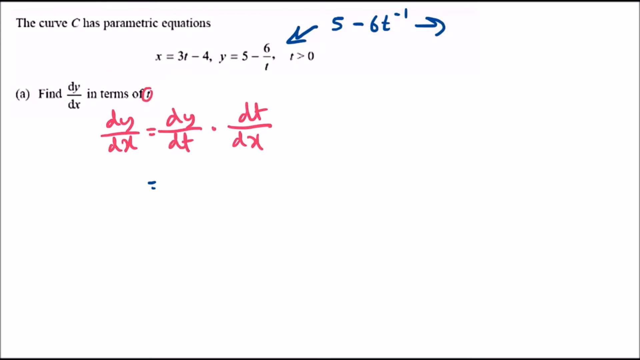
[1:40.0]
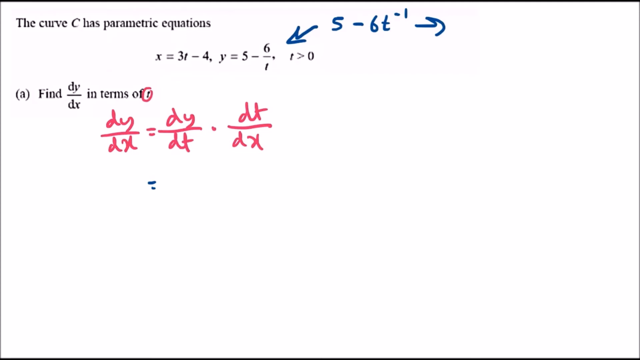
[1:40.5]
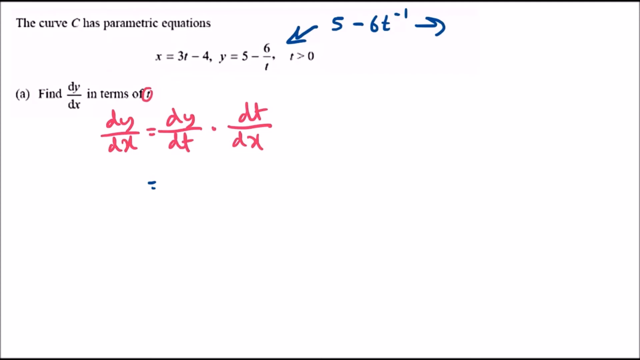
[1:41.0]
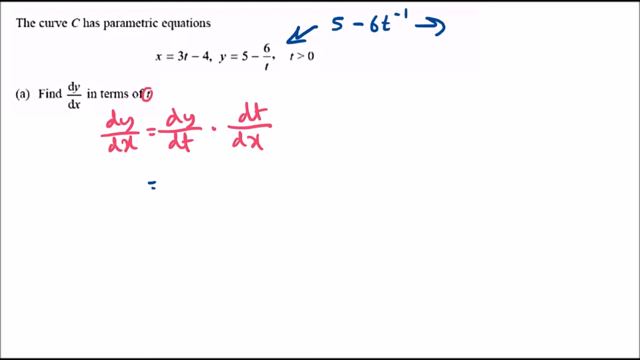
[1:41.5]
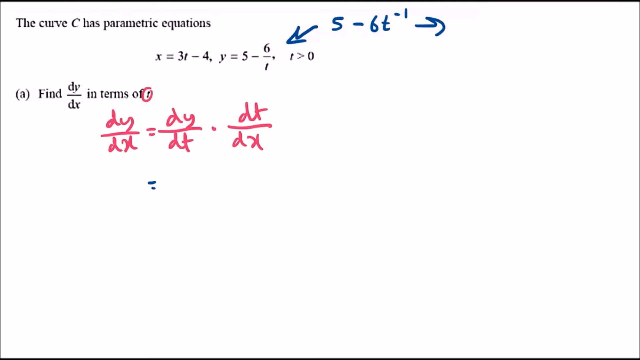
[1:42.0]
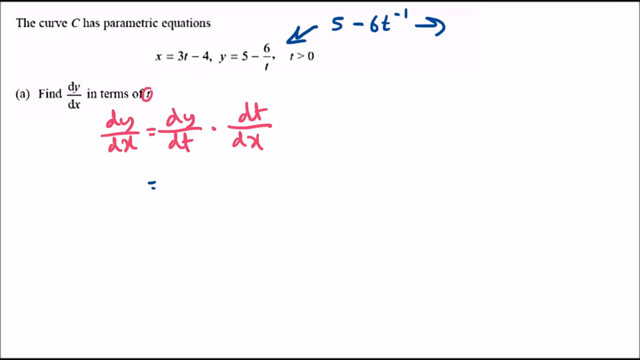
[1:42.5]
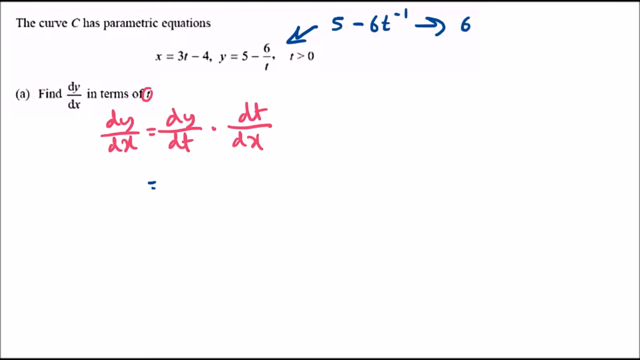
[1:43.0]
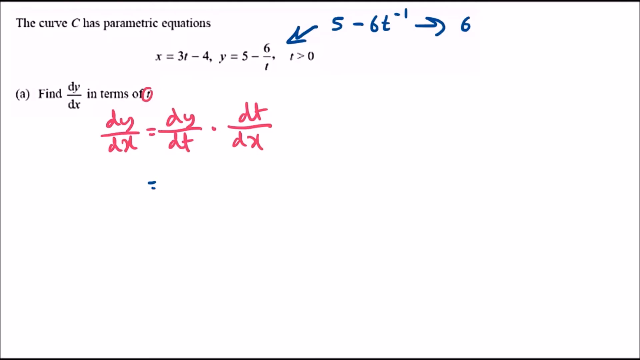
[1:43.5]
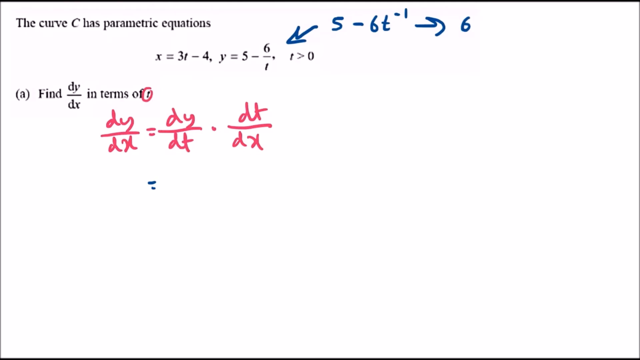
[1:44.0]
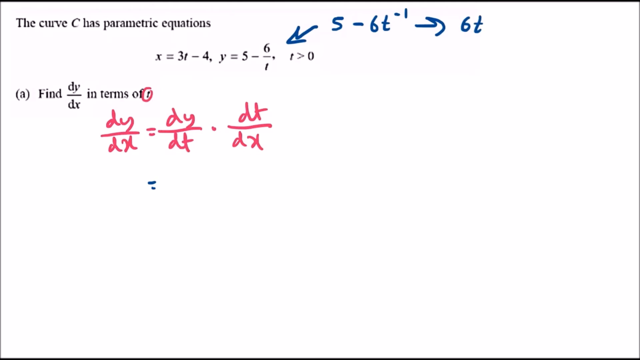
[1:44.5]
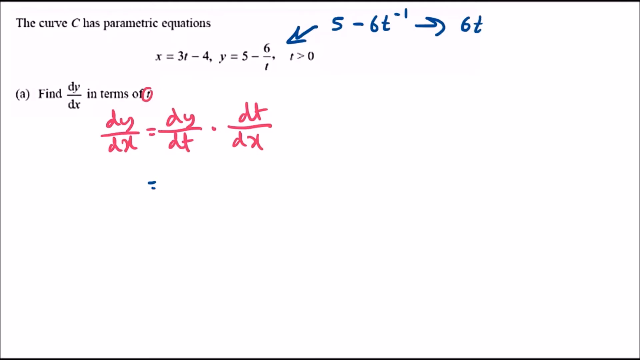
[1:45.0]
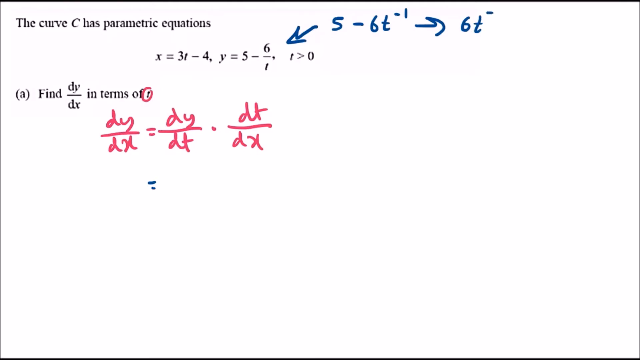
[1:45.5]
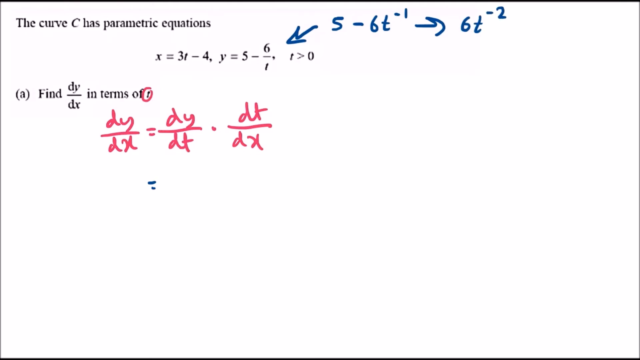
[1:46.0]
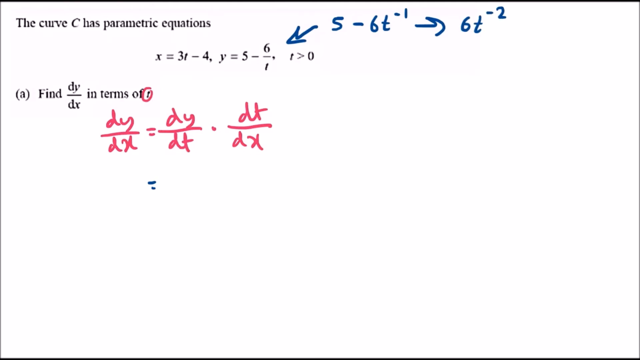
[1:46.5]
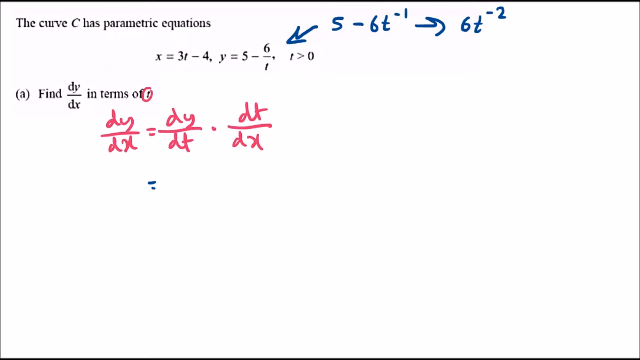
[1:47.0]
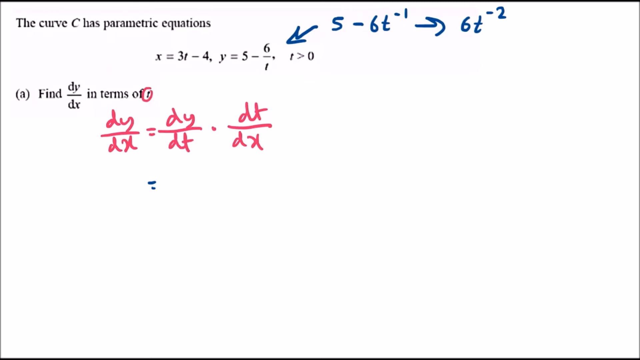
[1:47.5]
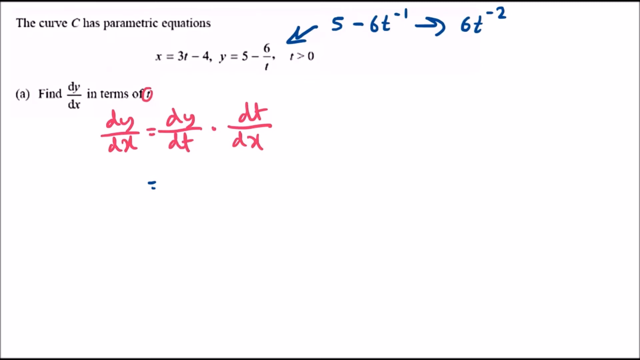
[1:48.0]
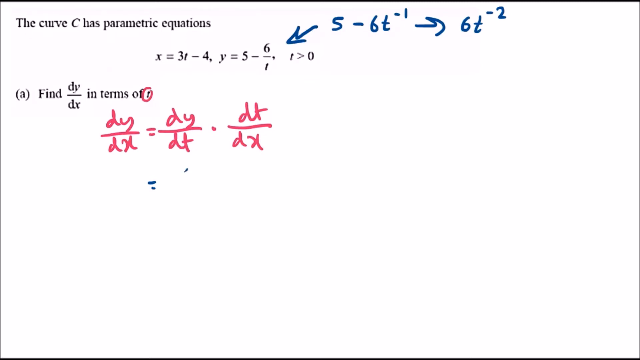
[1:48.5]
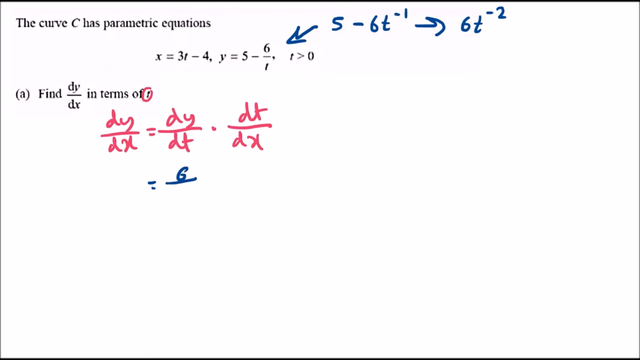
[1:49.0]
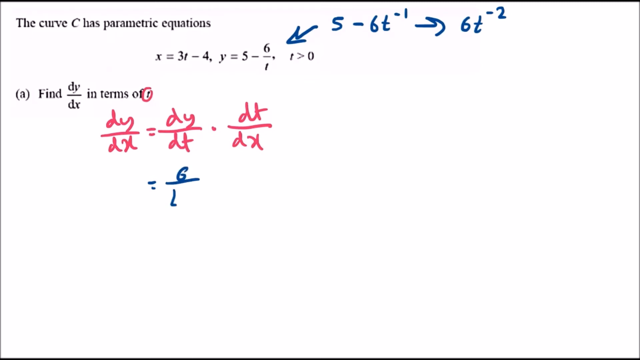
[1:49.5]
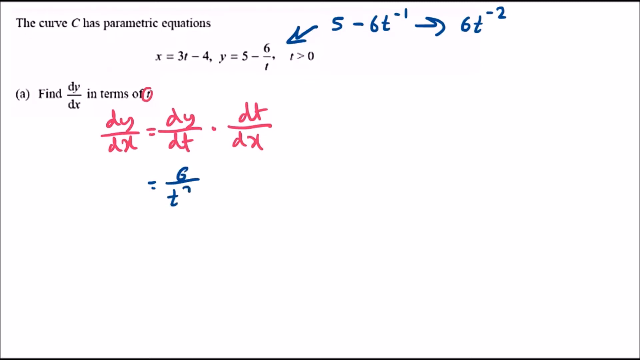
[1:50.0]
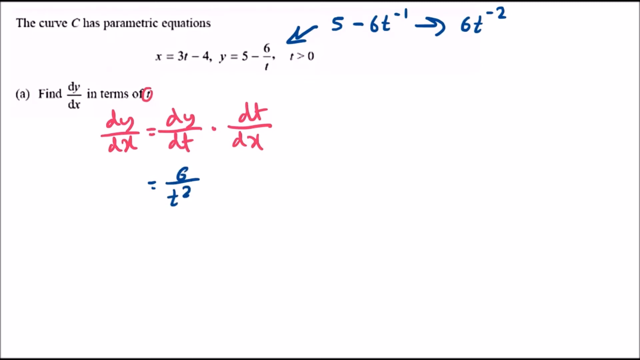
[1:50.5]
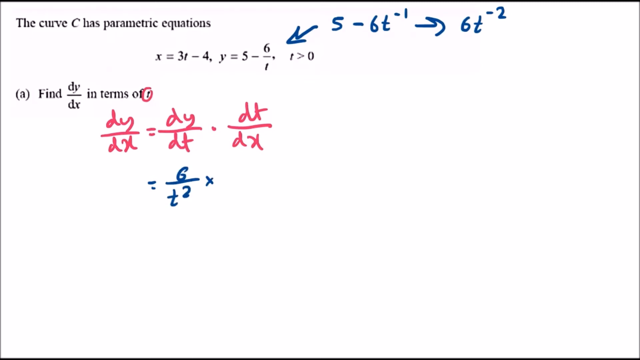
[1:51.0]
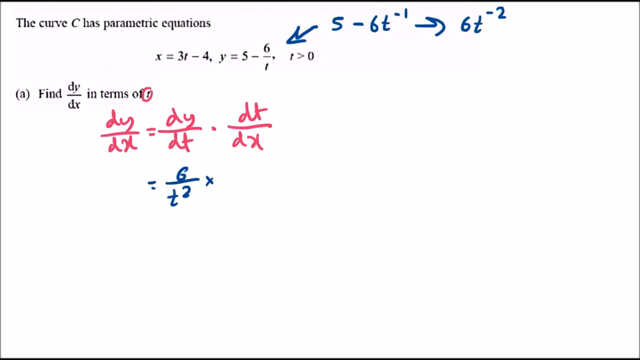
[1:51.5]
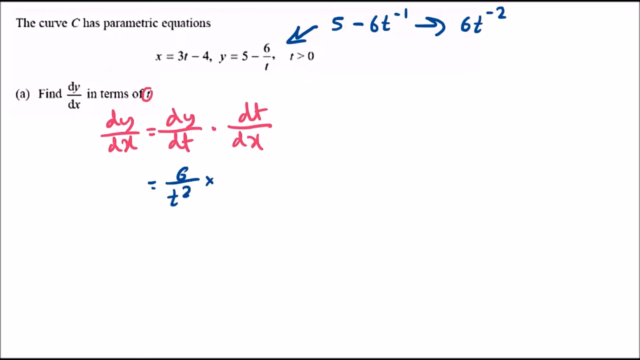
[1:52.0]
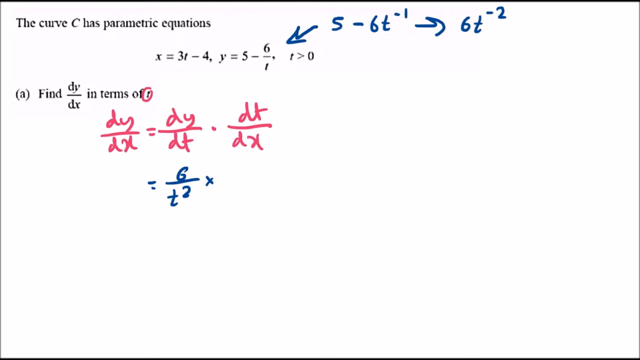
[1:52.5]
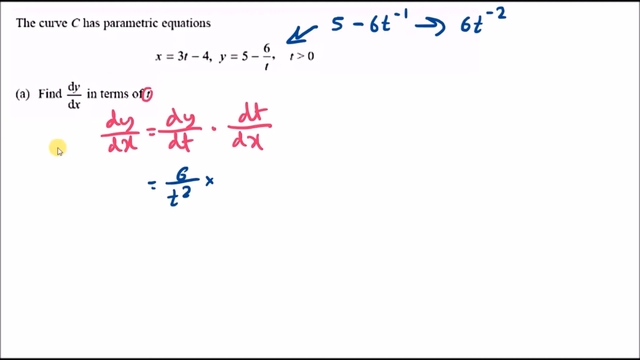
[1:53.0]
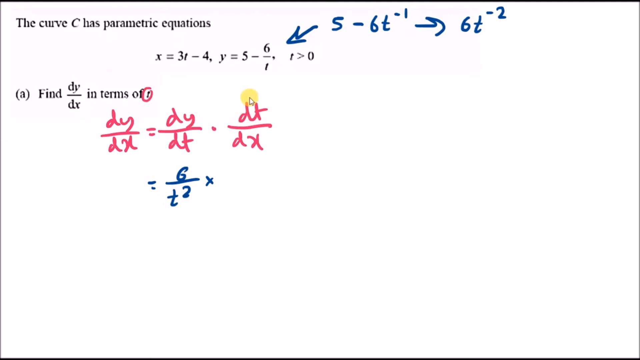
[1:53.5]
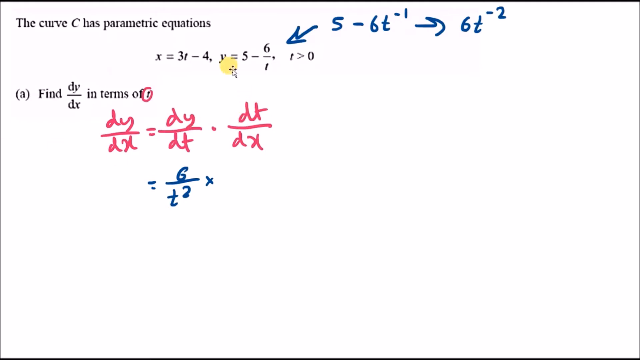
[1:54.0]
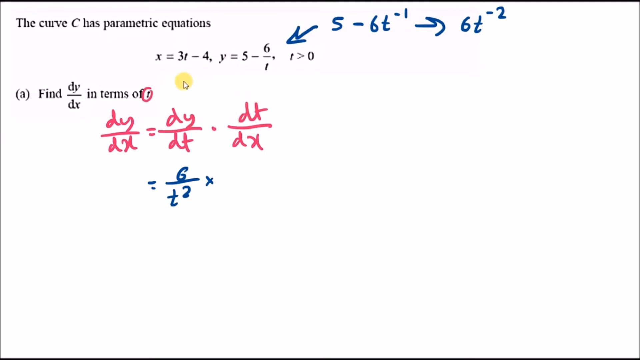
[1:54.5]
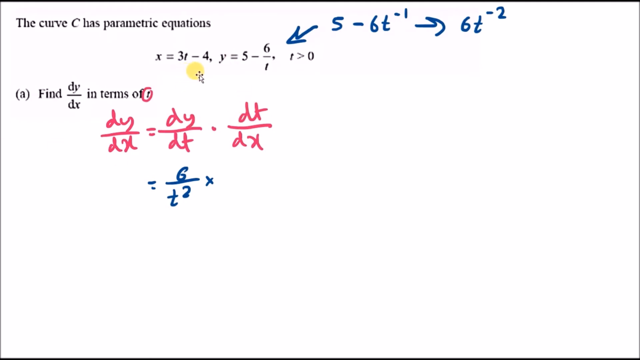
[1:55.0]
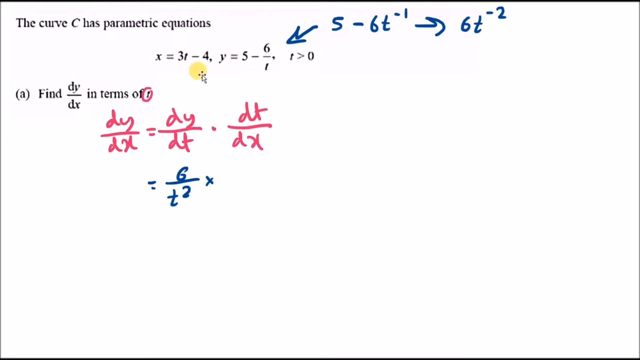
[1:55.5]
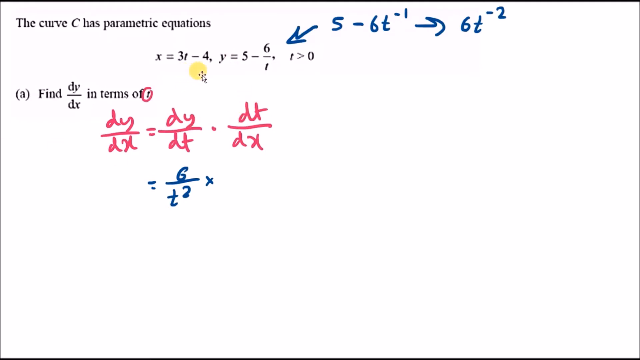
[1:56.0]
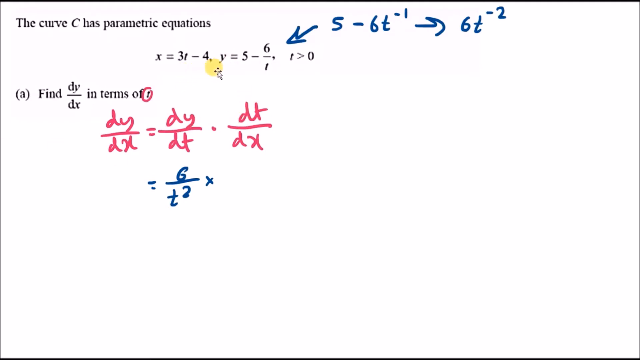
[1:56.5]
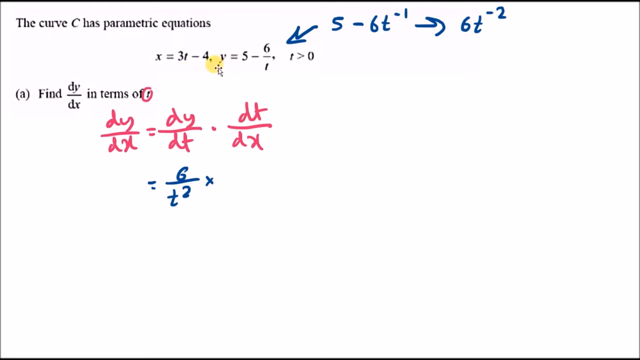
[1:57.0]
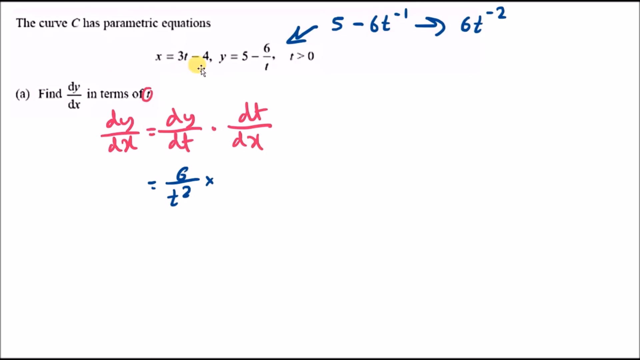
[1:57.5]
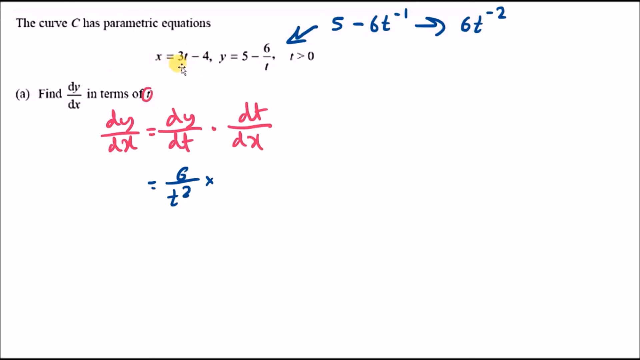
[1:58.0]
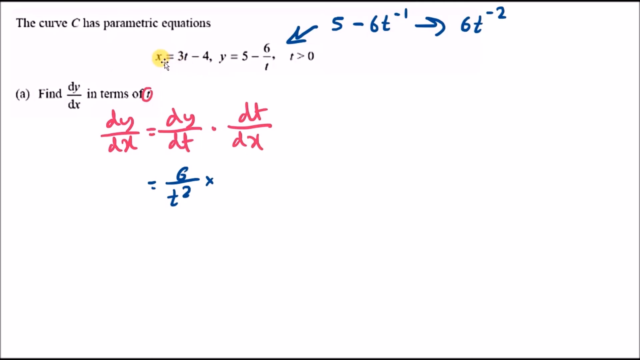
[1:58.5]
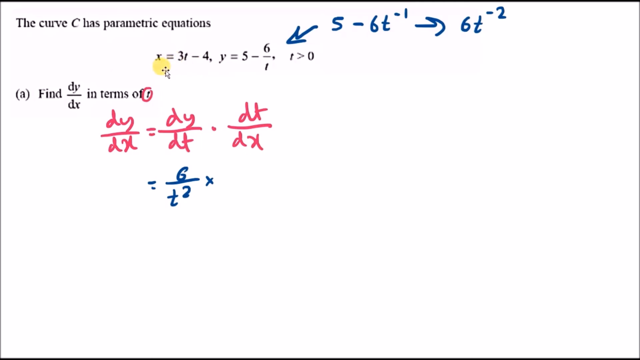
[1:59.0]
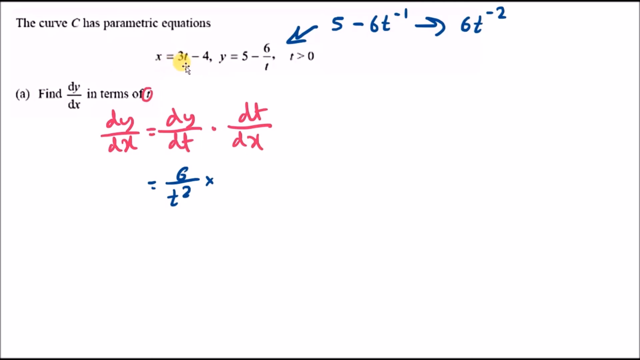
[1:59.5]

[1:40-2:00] A mostly white background shows the start of a math problem asking to find dy over dx in terms of t, with parametric equations for the curve C. In pink, dy / dx equals dy / dt and beside that dt / dx is written. In blue, an arrow in the question indicates that the parametric equation y = 5 - 6/t is the same as 5 - 6t to the power of negative 1, with another arrow beside that and 6t to the power of negative 2 written beside it. Below the initial equation, equals 6 / t to the power of 2 is written in blue marker. The cursor then points to the x equals value in the parametric equations.